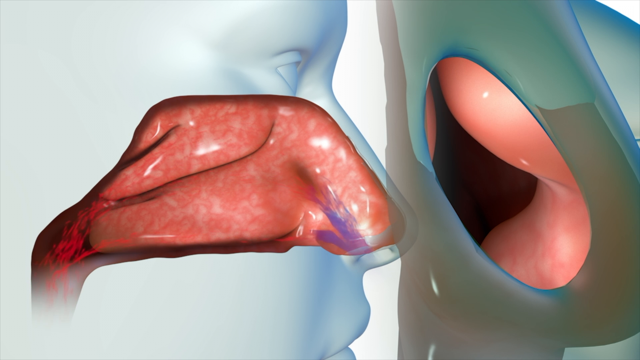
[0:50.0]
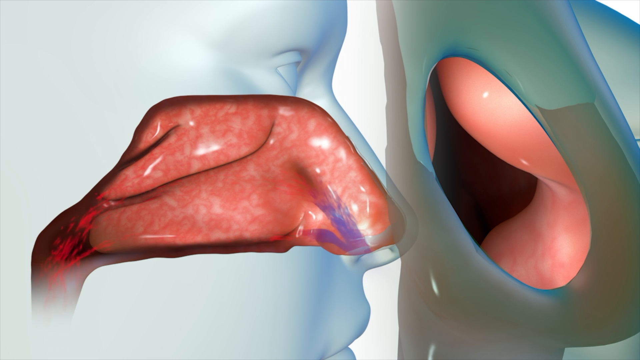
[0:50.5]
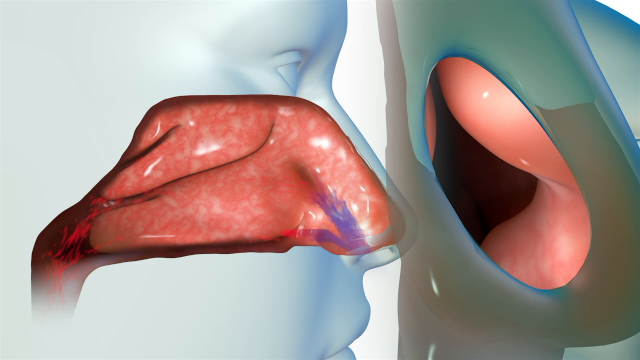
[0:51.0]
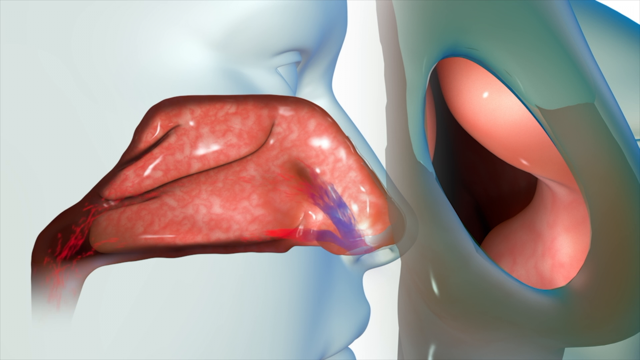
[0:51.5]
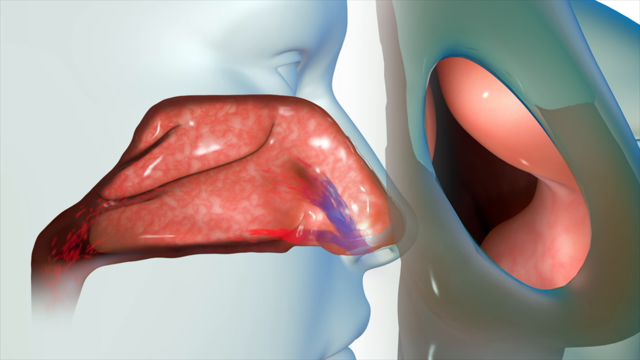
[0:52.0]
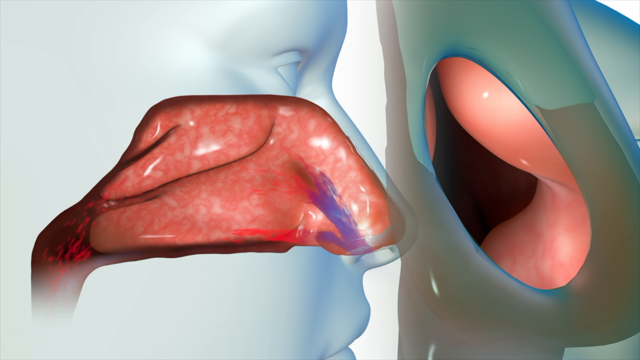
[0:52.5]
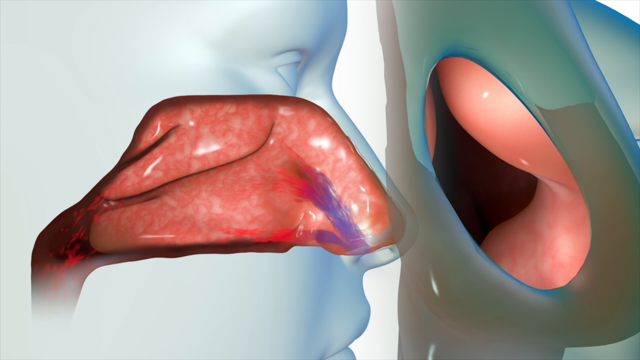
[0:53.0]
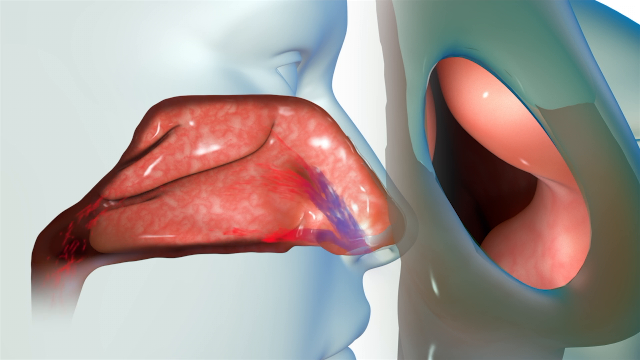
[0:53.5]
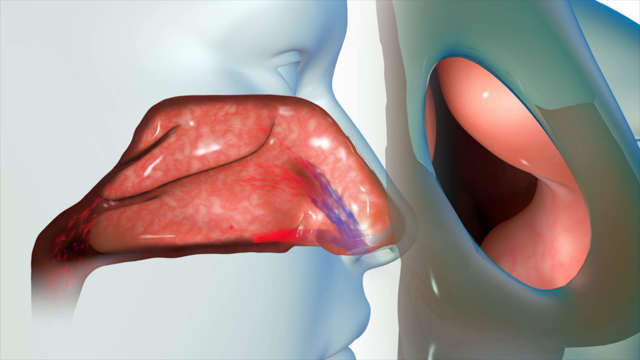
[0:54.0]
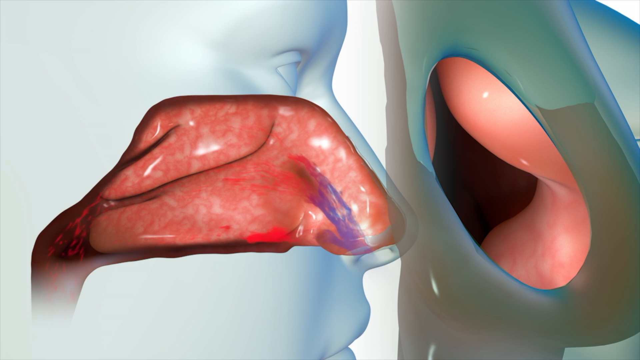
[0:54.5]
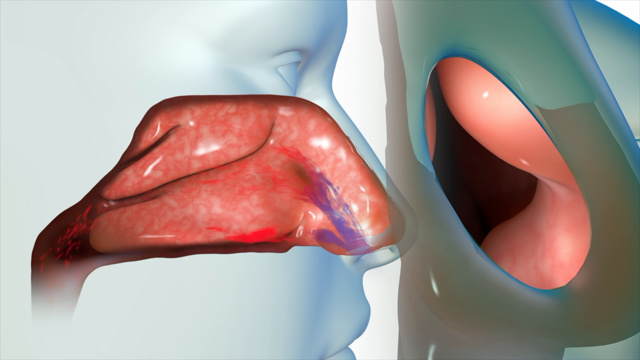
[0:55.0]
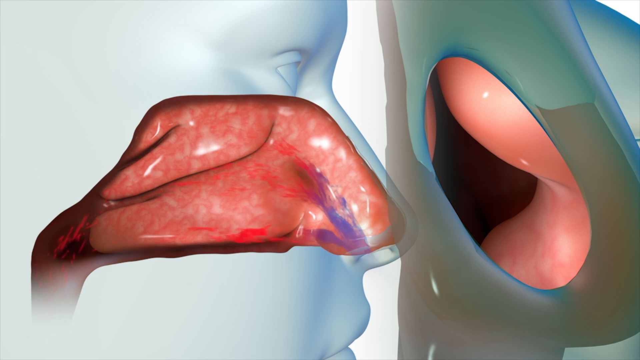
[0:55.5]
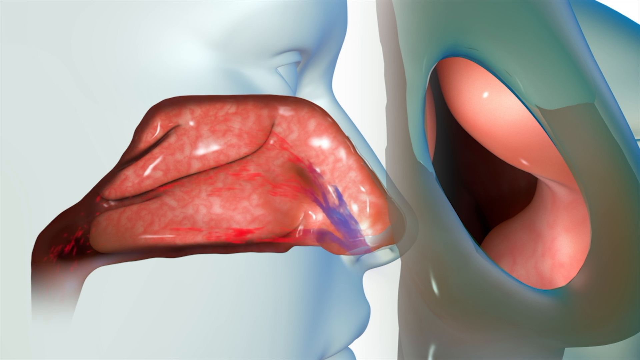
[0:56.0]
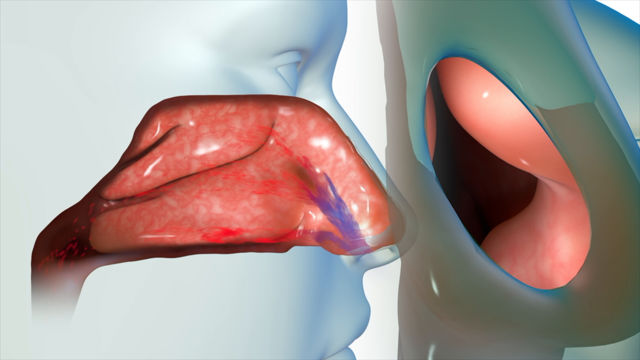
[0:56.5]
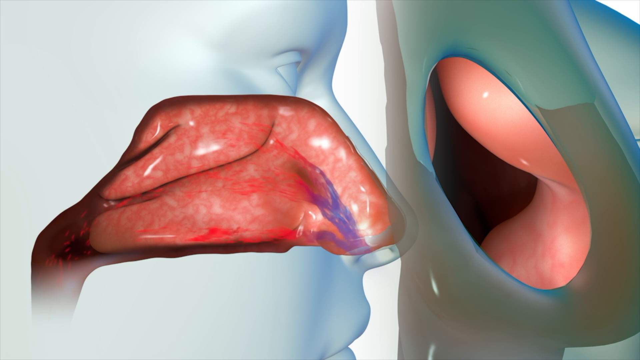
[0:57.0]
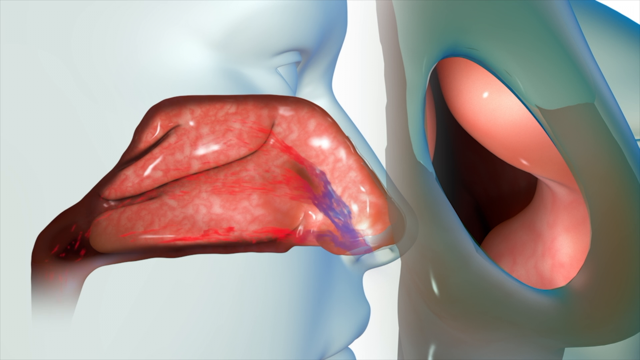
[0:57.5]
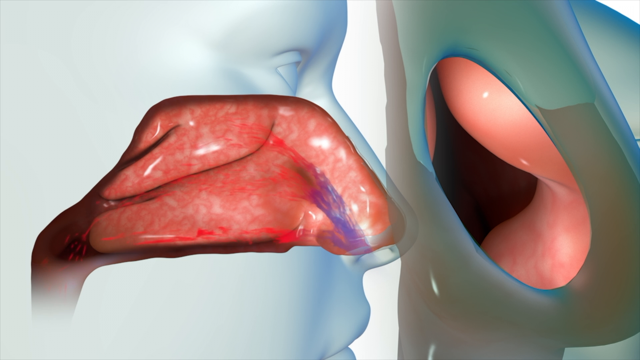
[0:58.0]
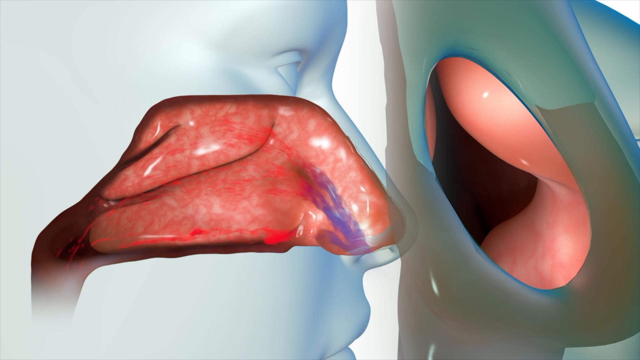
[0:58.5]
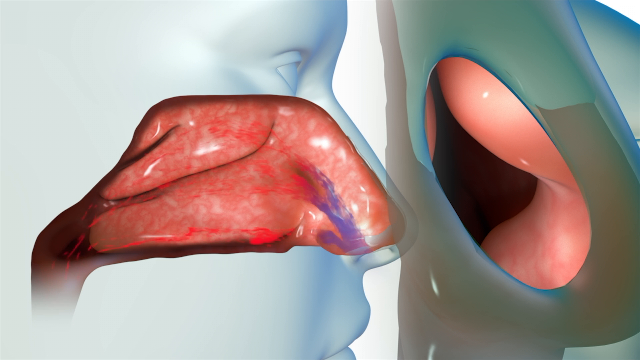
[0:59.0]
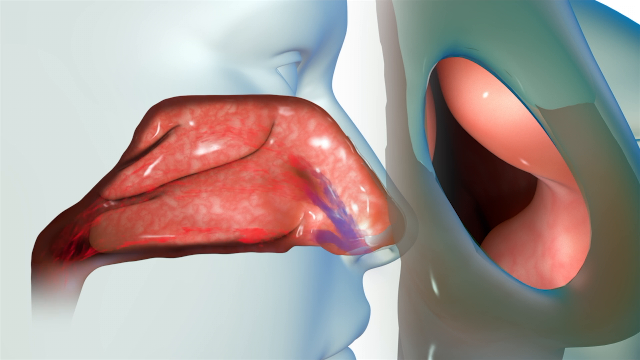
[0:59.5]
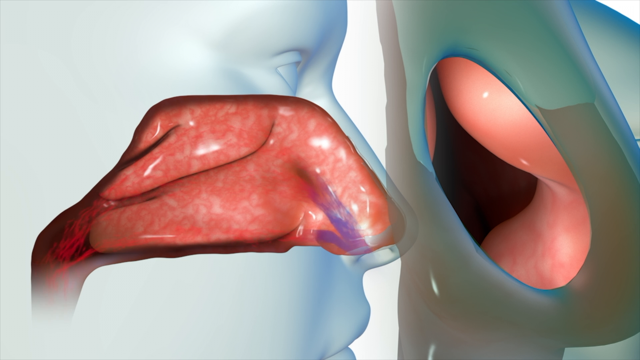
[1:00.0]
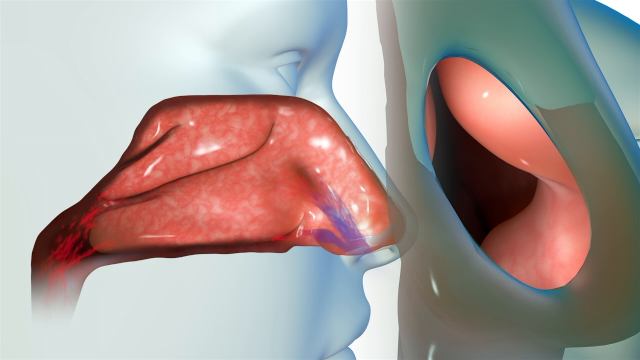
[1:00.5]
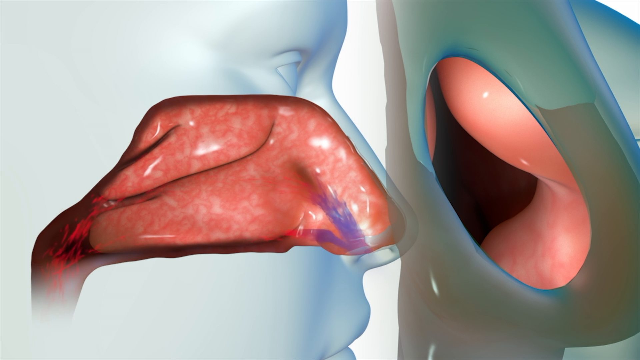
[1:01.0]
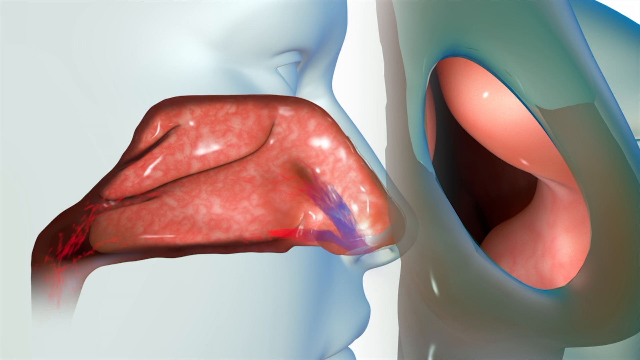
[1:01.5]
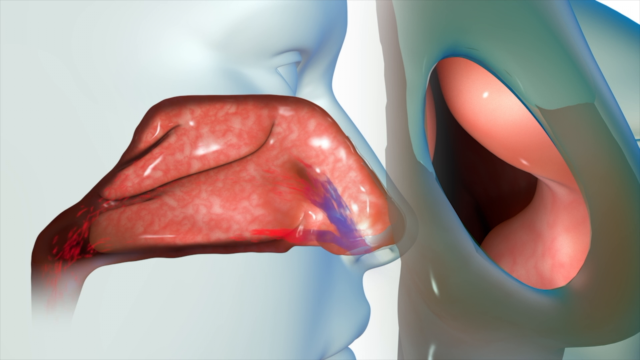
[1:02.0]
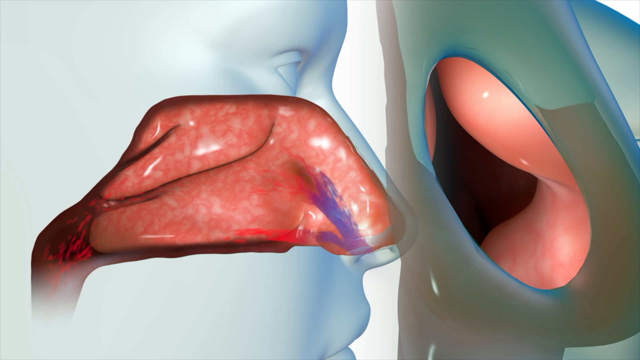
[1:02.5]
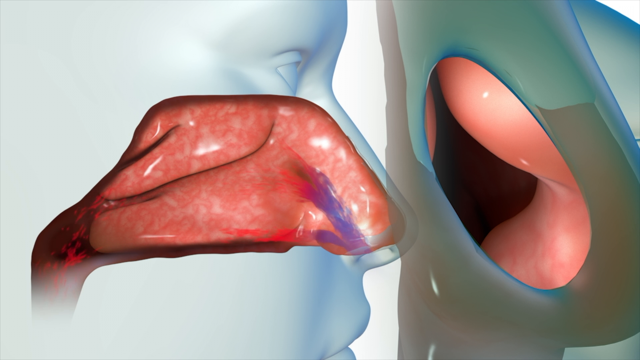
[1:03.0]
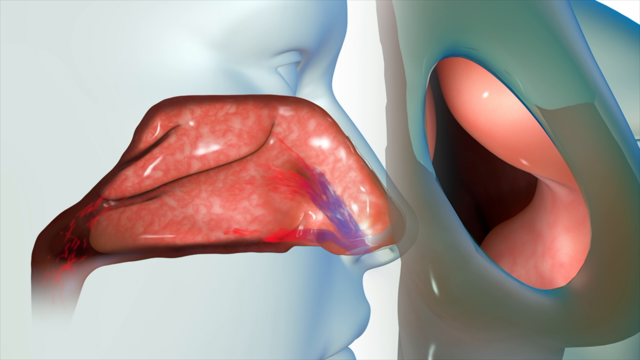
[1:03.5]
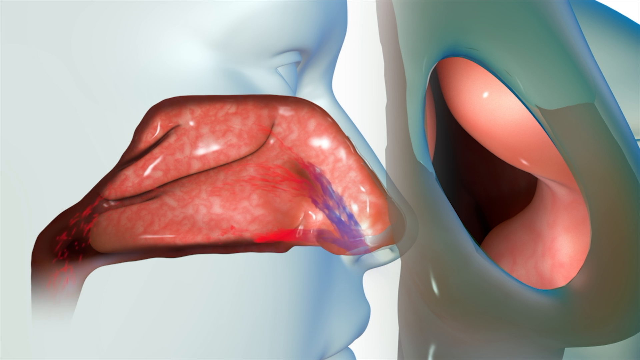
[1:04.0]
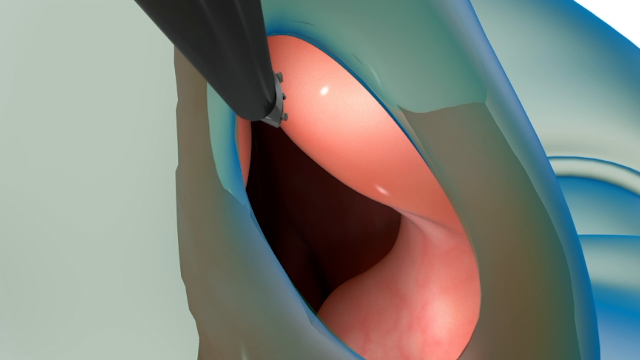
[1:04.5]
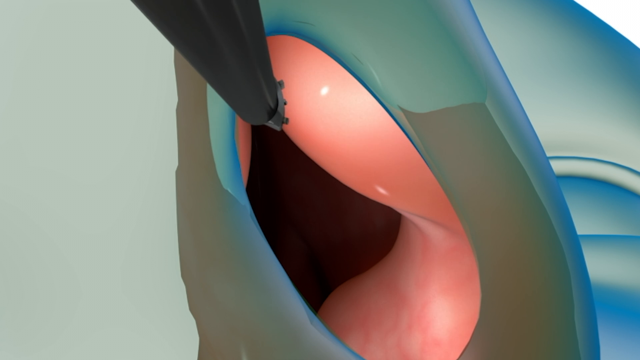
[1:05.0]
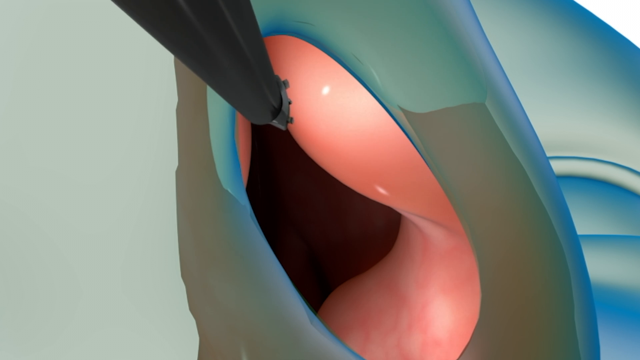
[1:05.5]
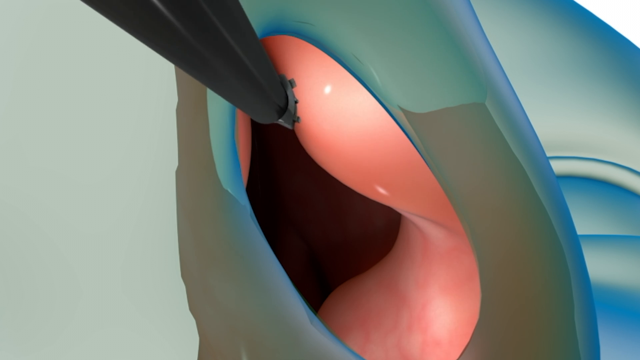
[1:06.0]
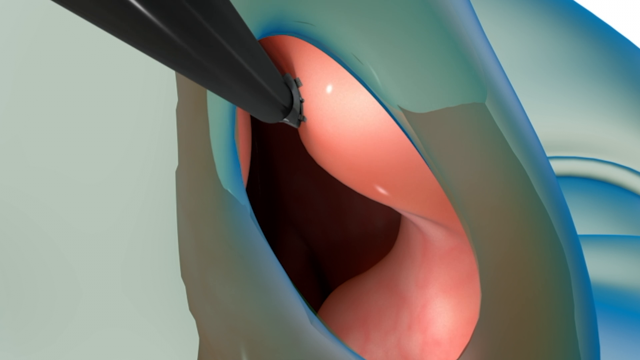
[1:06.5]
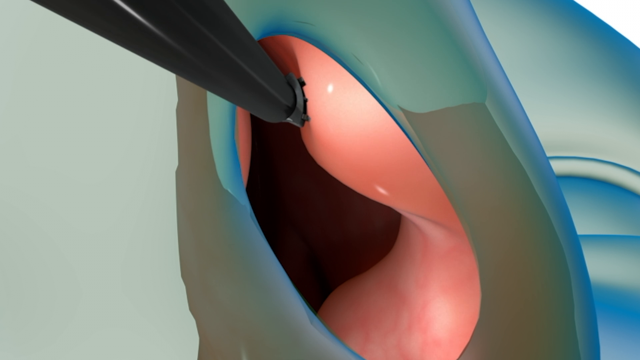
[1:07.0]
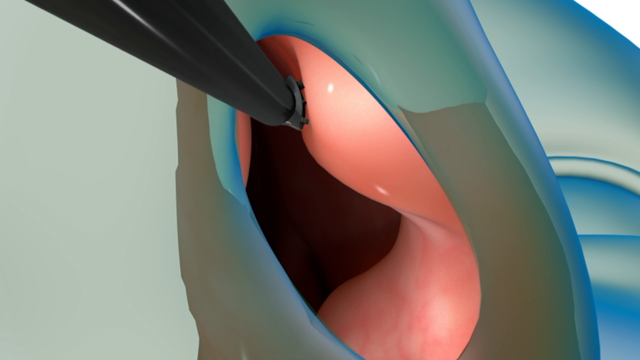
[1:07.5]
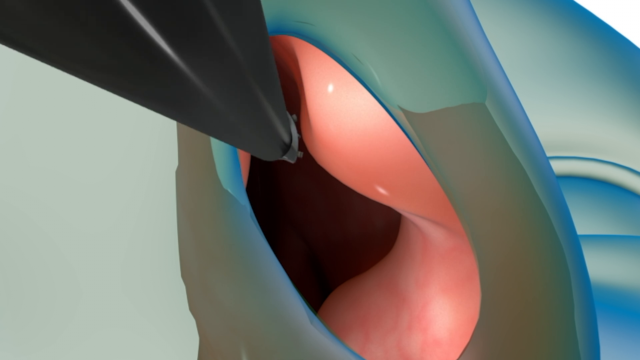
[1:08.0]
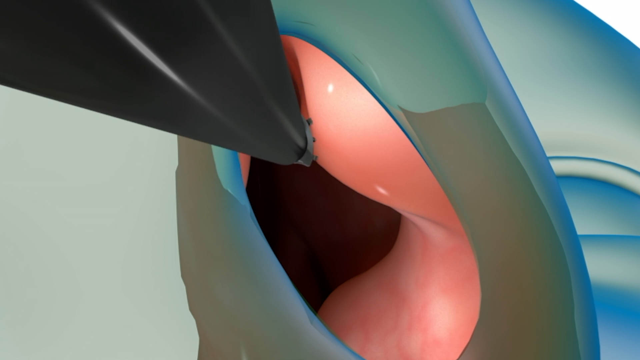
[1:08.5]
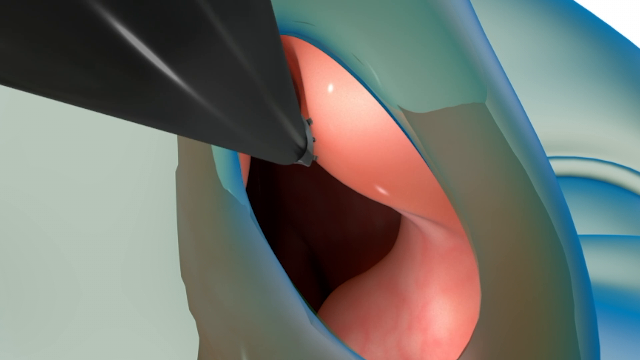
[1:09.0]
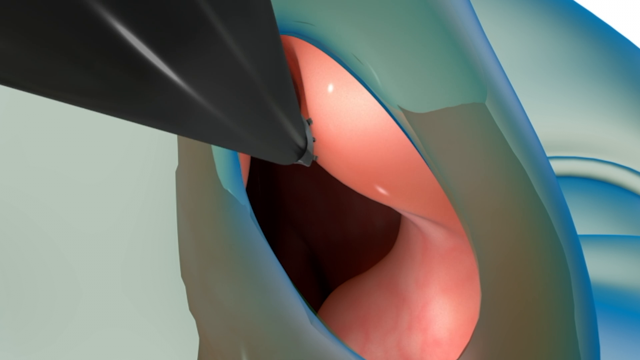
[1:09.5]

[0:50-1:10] The nasal passages are shown with blue and red lines that continue to animate toward the left side of the passages. At first the lines in the center are very sparse, but they gradually become more noticeable, then fade out again. Two views of the nasal passages are shown: one on the left from the side of the face, and one on the right pointed directly into the nostrils. The right view then transitions to take up the full screen. The tissues still appear very inflamed. What appears to be some sort of instrument is inserted into the nostril from the top side of the camera view; it appears to push the tissues in slightly and is then inserted deeper into the nostril.